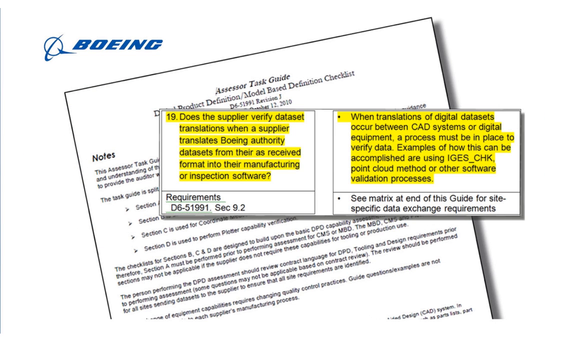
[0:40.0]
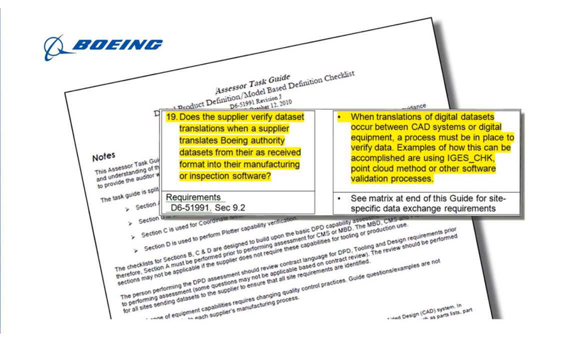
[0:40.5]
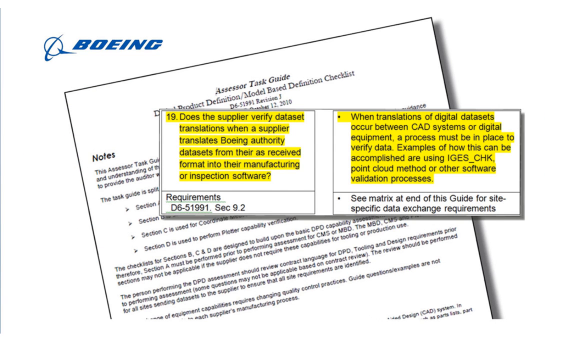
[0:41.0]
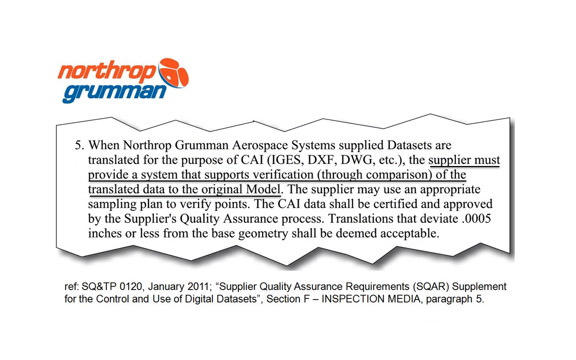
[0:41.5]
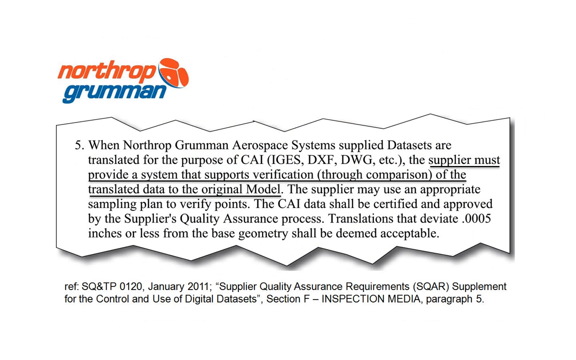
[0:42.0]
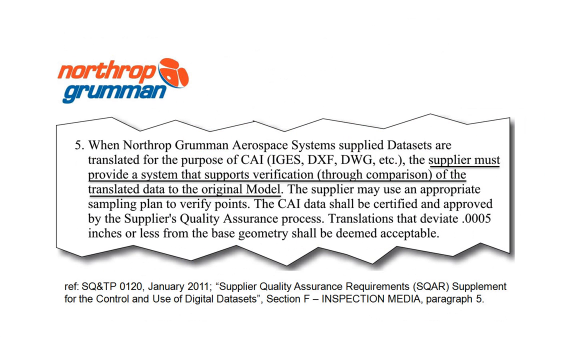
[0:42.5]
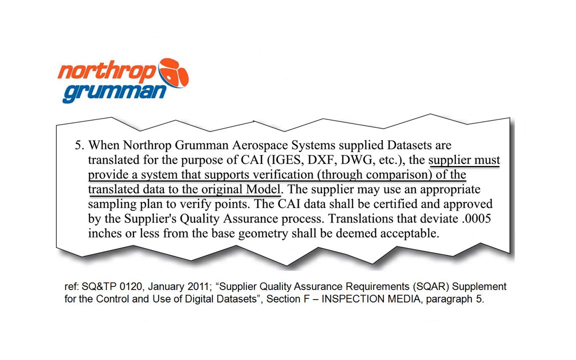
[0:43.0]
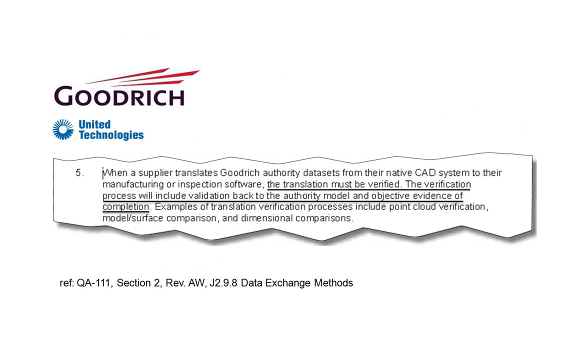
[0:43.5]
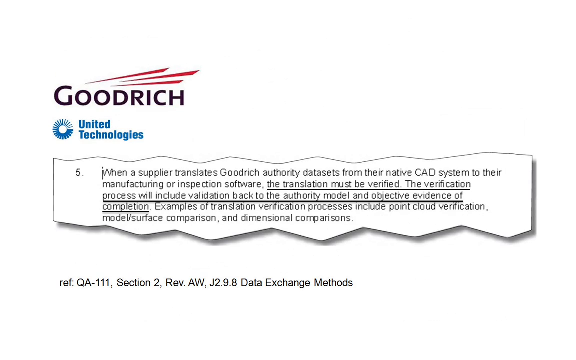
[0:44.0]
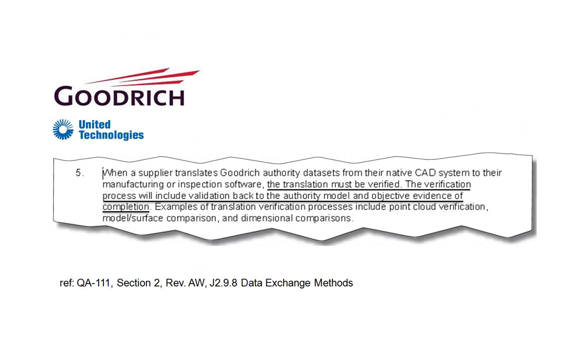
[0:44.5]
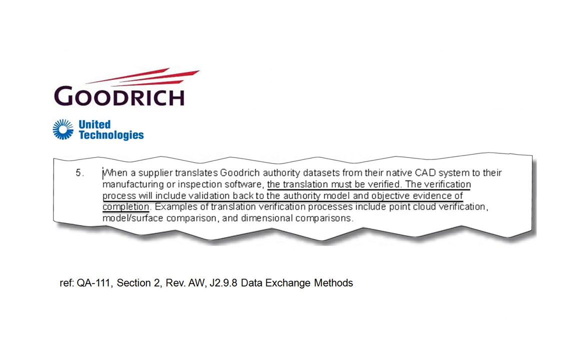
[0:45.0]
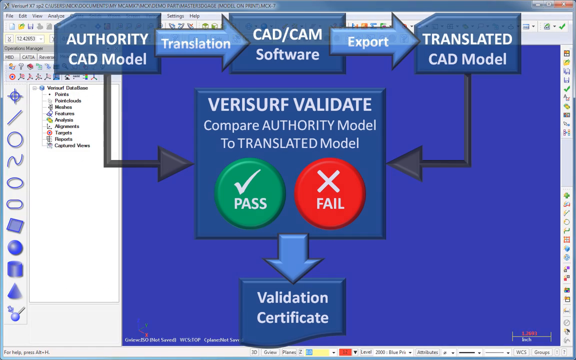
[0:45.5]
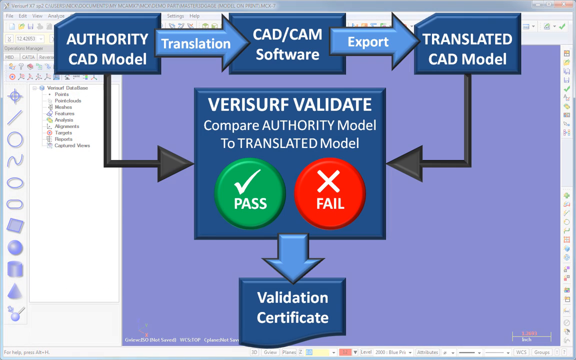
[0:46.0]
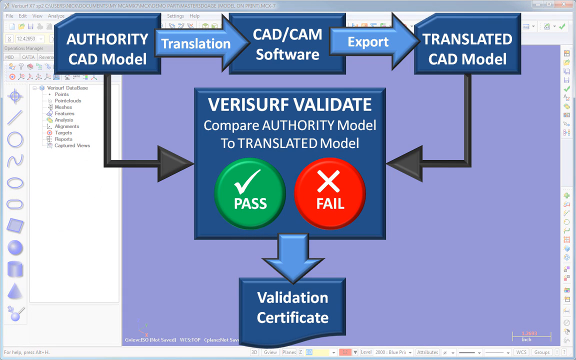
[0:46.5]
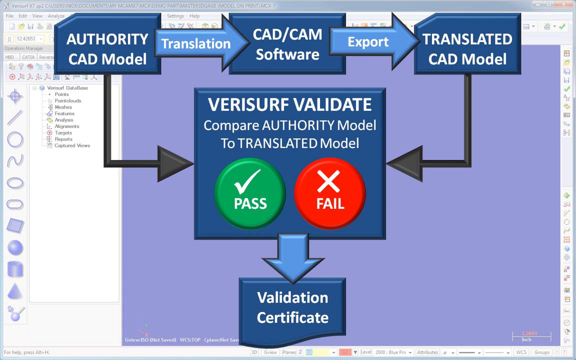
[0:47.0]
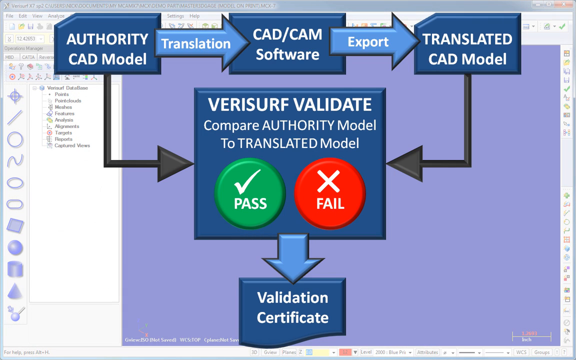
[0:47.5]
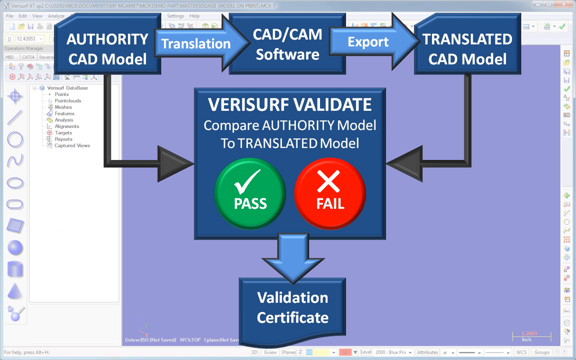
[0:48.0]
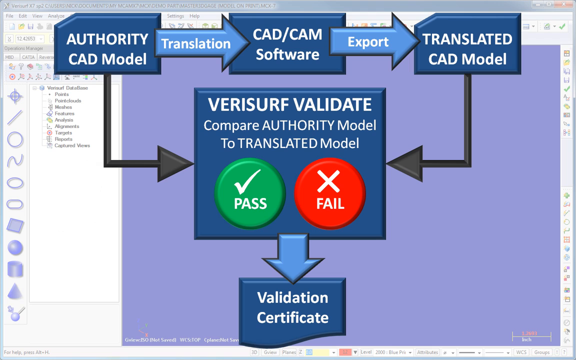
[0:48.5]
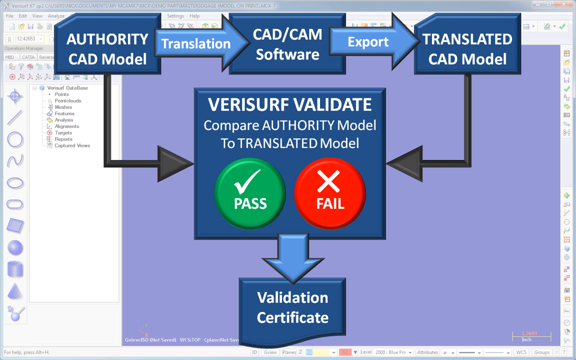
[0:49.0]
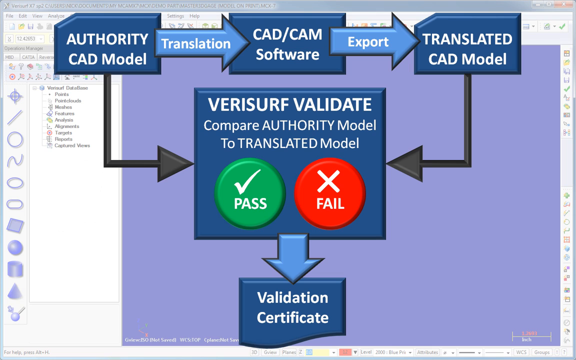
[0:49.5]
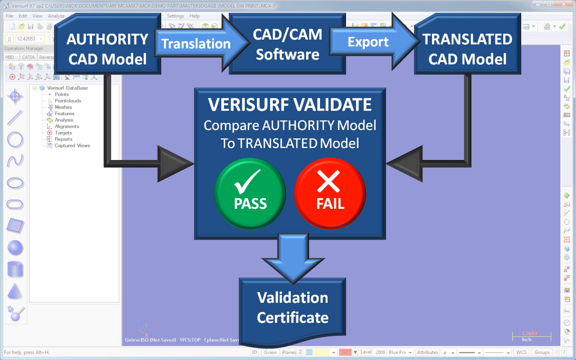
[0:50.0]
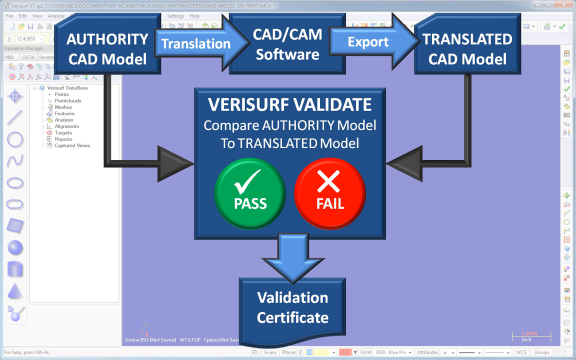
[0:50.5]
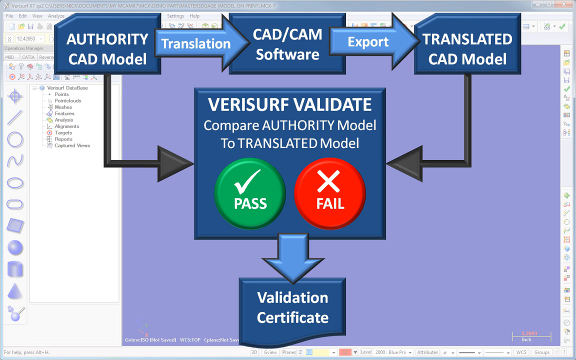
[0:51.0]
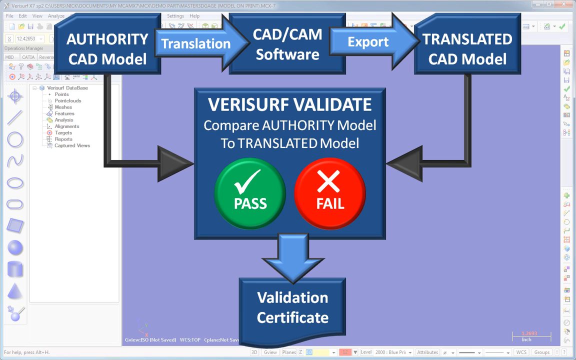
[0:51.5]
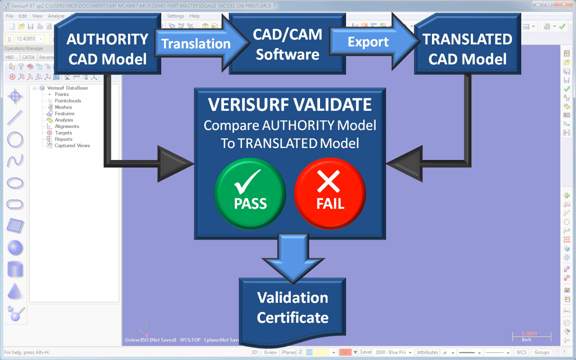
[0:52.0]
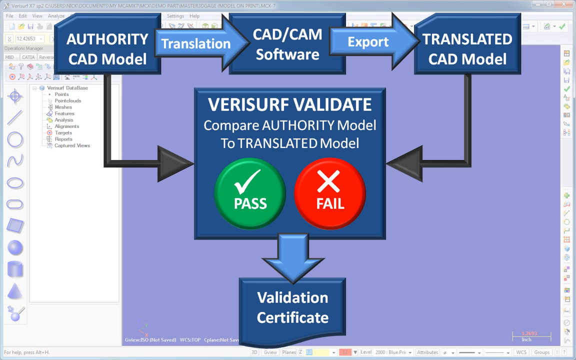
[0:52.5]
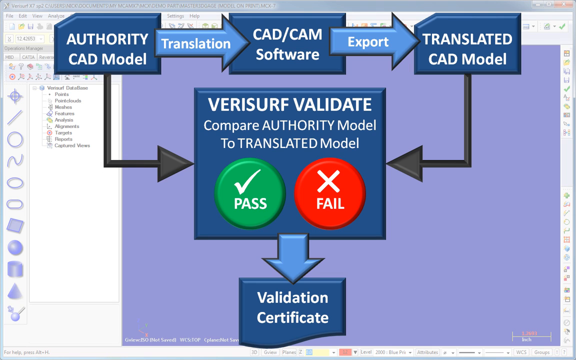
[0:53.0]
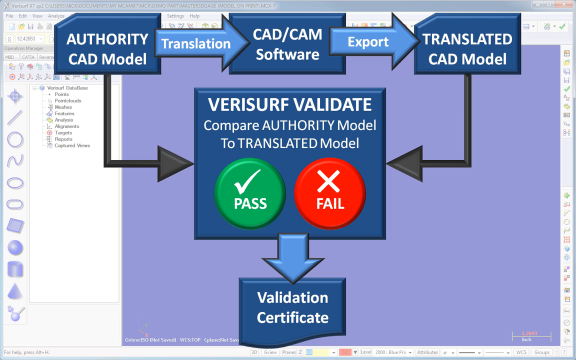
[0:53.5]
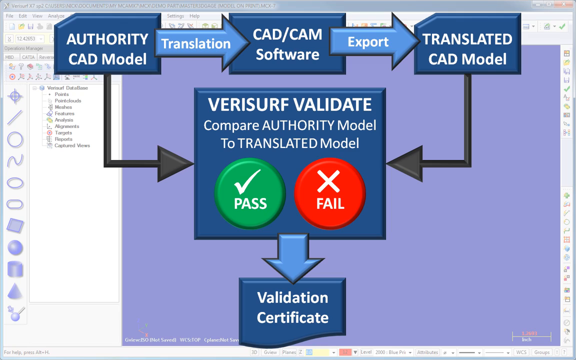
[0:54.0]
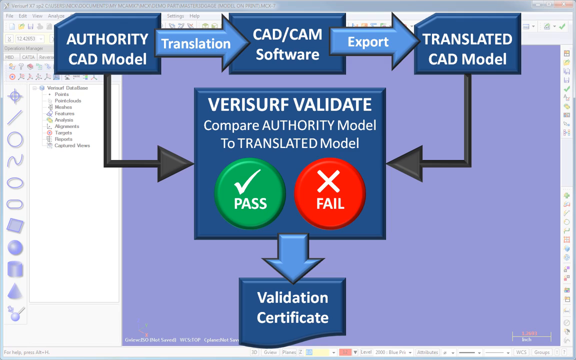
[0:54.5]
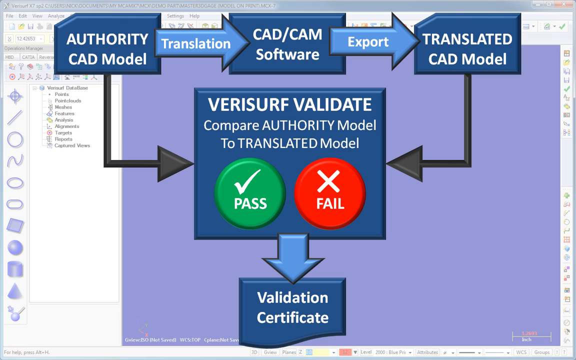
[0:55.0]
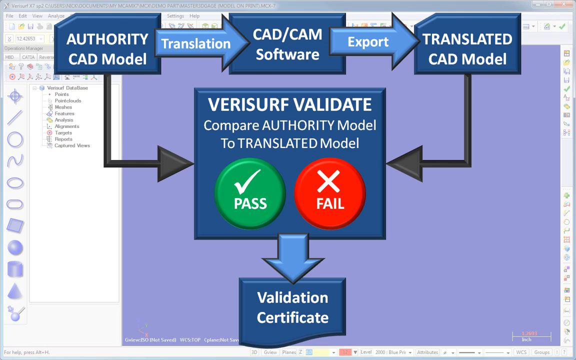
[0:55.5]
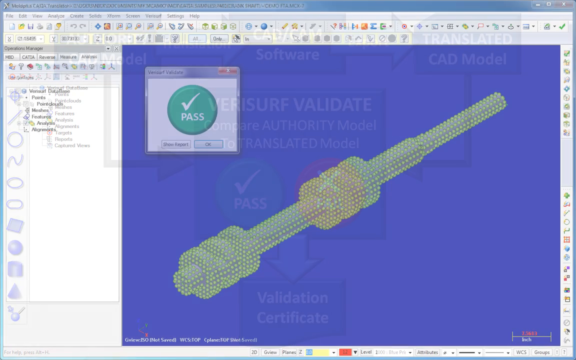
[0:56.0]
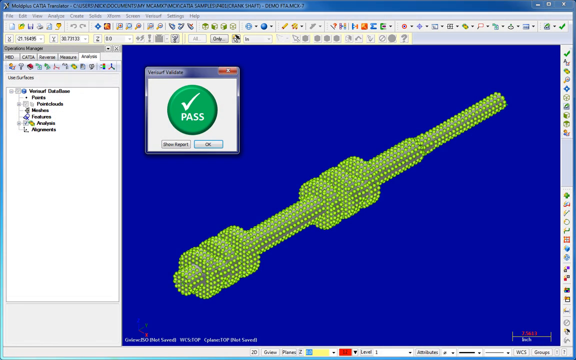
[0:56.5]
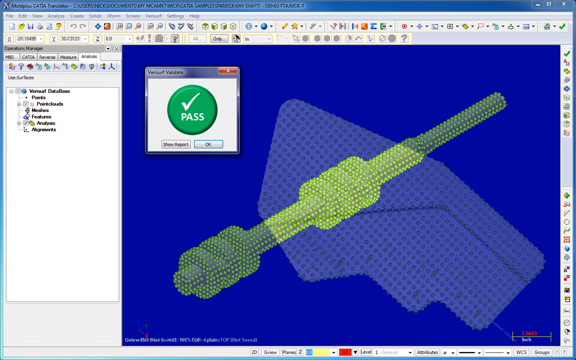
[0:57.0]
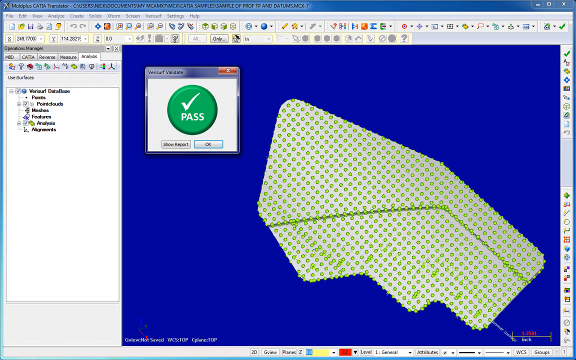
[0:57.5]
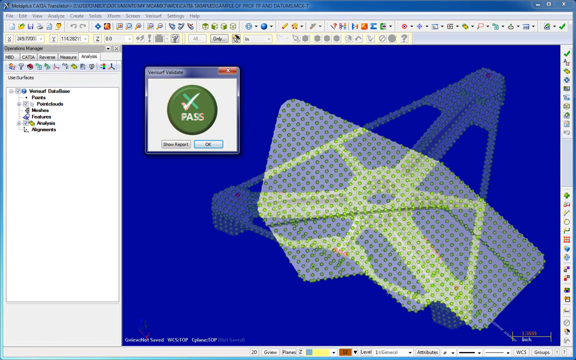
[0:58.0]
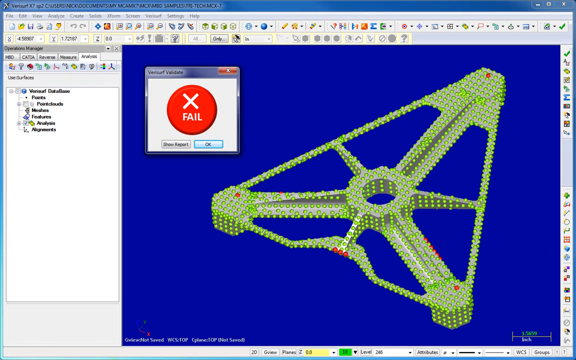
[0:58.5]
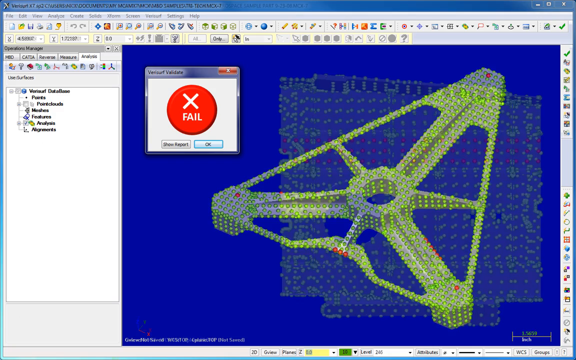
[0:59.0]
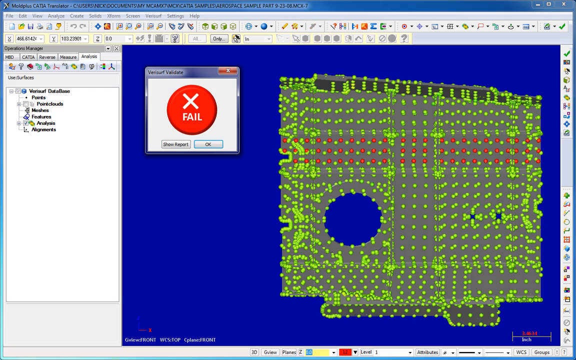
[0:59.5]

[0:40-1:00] Instruction manual excerpts are shown that mention the need to test third-party parts, apparently including parts from Boeing or Goodrich used in the assembly of a product. The excerpts cover calibrating the measurement software, and the word "translated" appears to describe bringing the base model into the software. According to the instructions, the geometry has to comply with the specs within five one-thousandths of an inch. The source is unclear; it might be an industry standards website and may include information from Northrup Grumman or other firms.